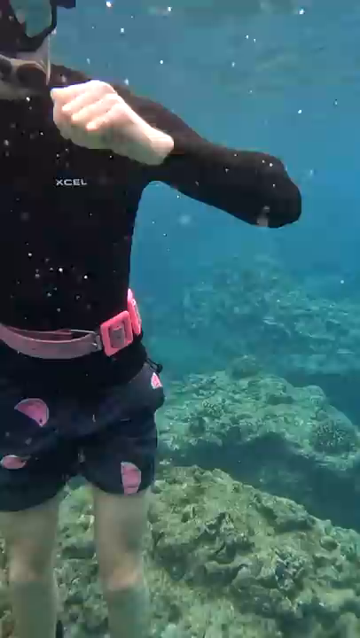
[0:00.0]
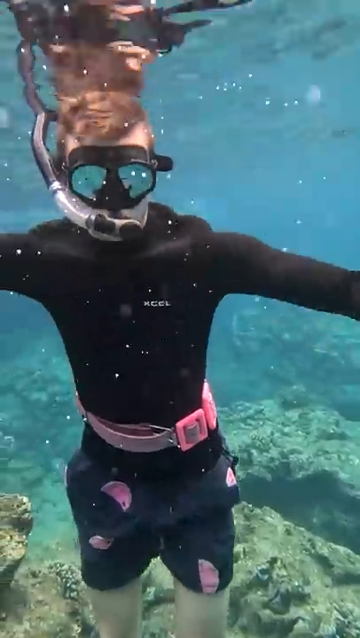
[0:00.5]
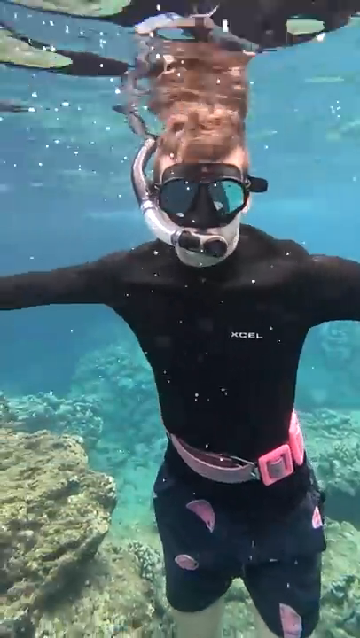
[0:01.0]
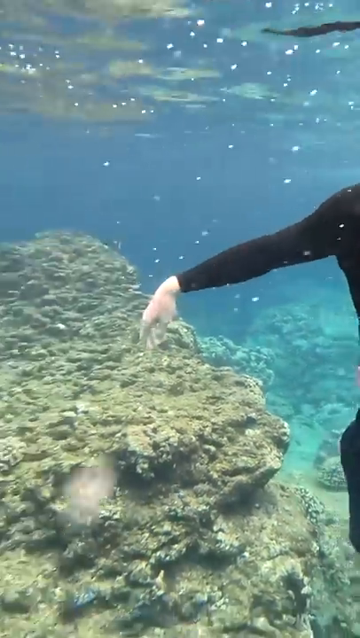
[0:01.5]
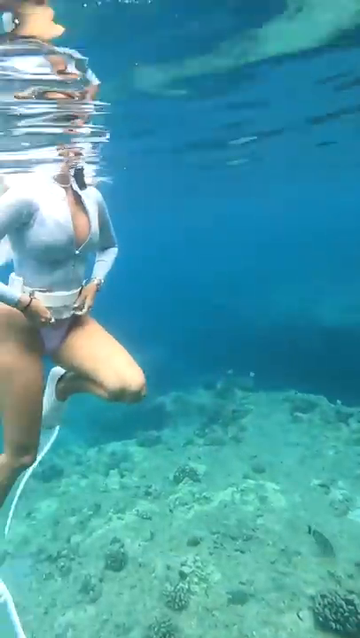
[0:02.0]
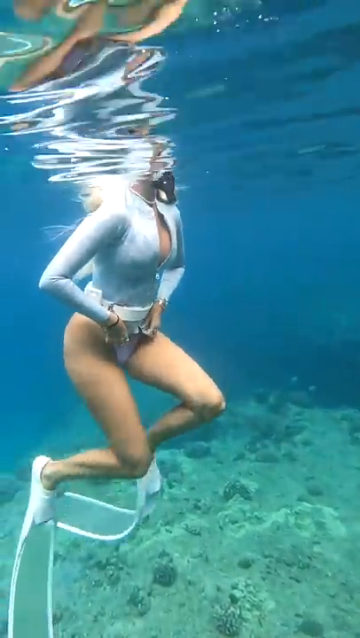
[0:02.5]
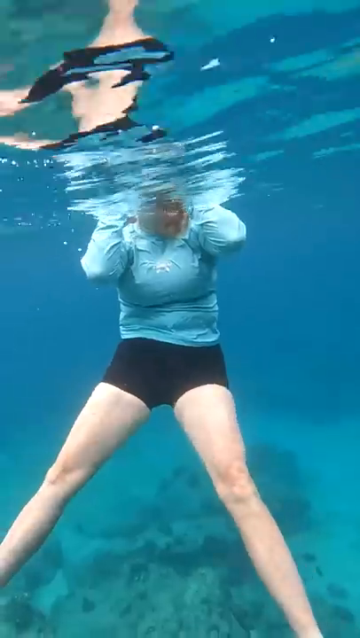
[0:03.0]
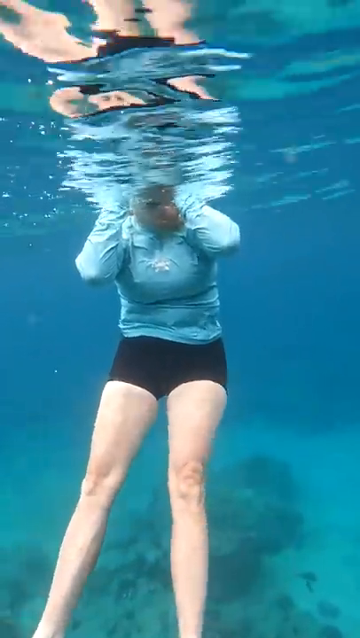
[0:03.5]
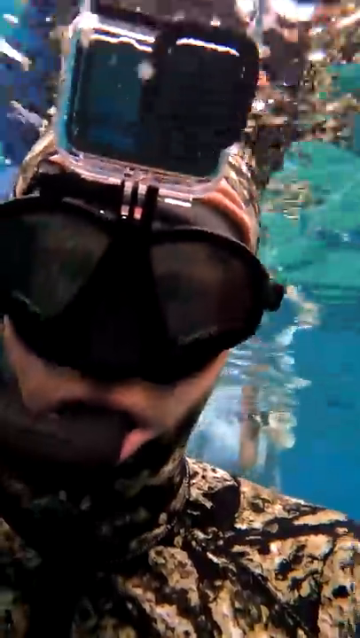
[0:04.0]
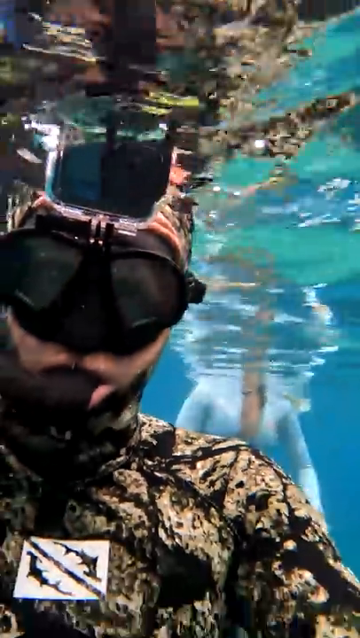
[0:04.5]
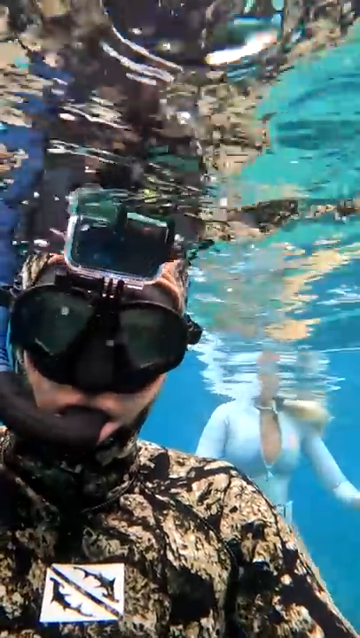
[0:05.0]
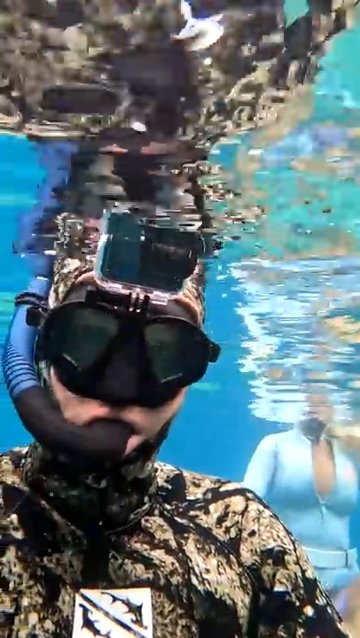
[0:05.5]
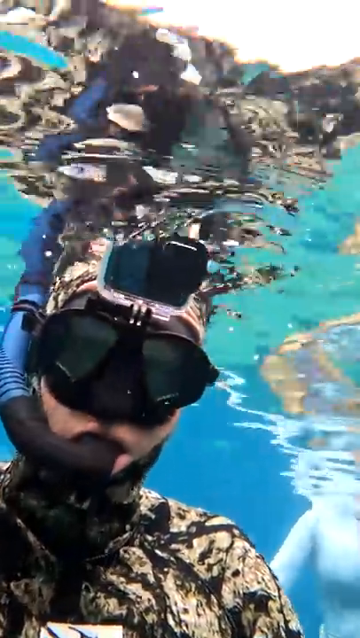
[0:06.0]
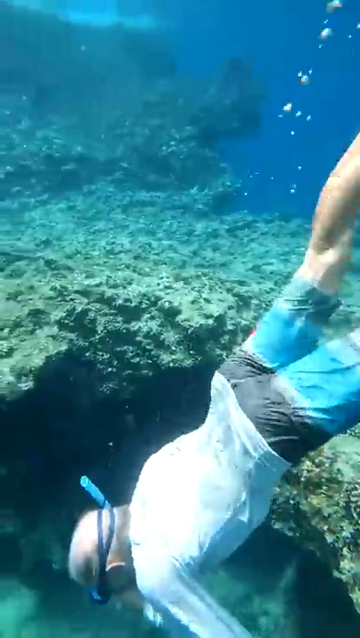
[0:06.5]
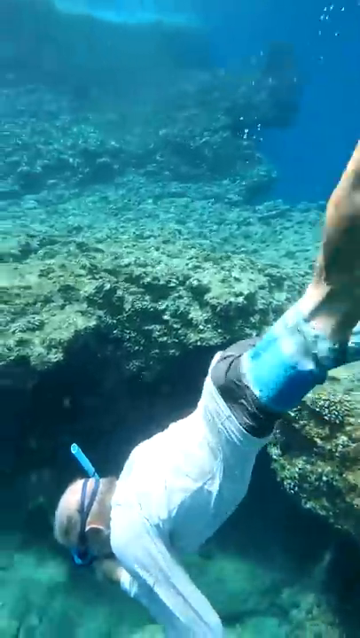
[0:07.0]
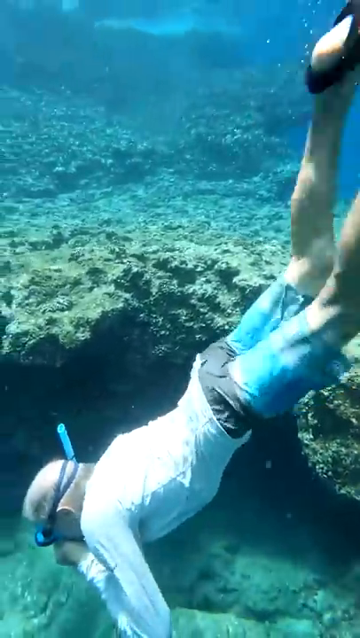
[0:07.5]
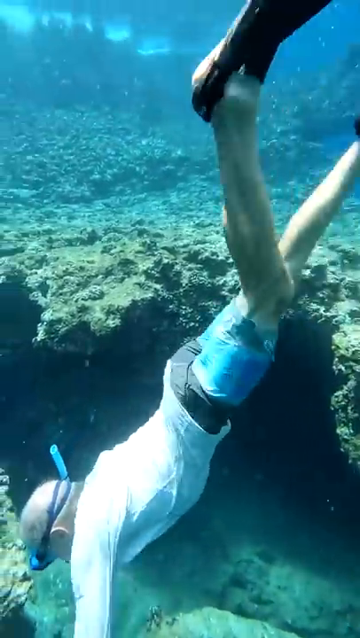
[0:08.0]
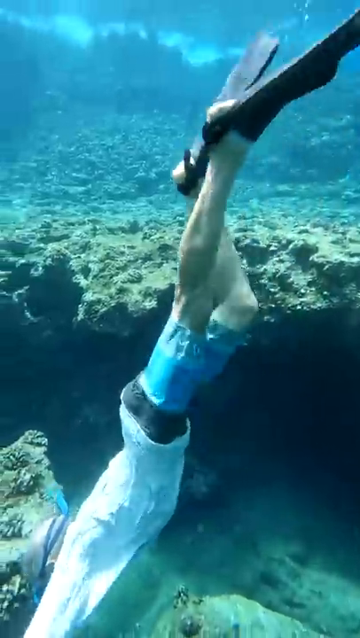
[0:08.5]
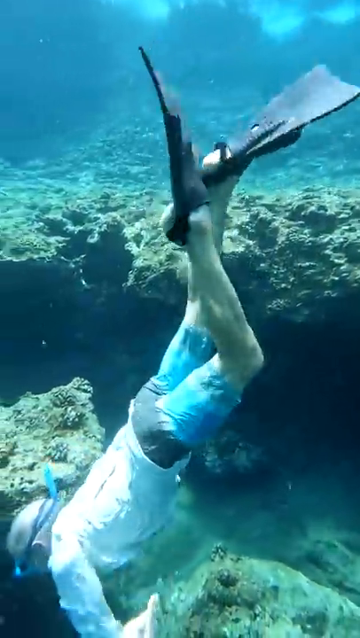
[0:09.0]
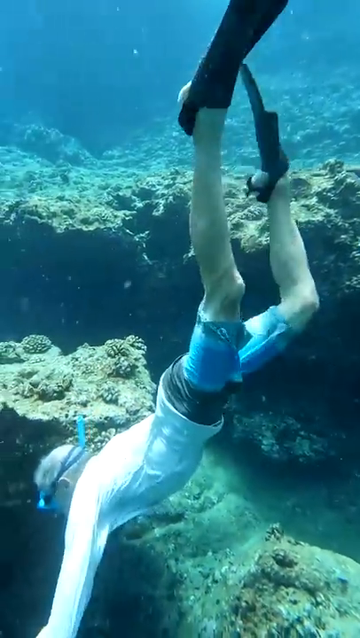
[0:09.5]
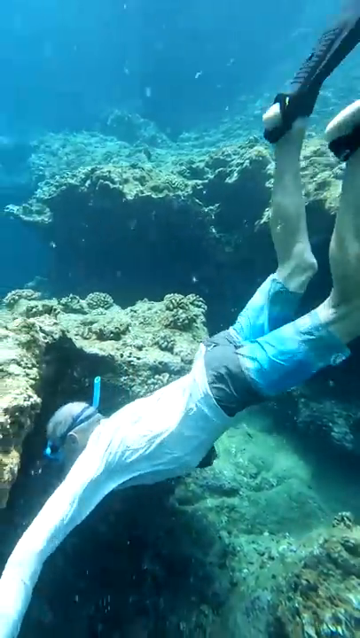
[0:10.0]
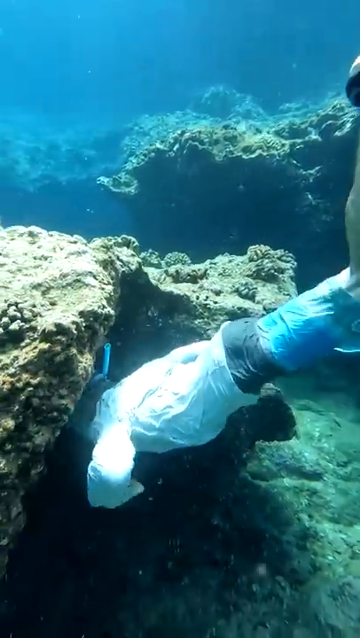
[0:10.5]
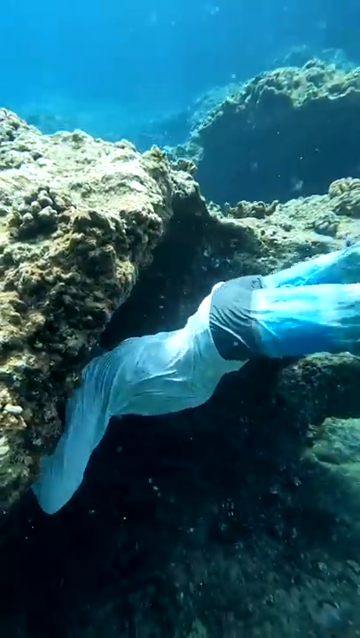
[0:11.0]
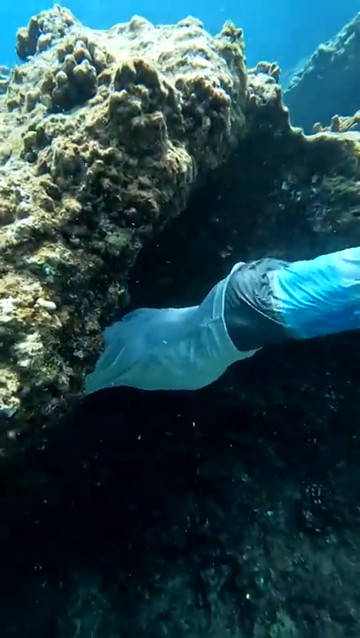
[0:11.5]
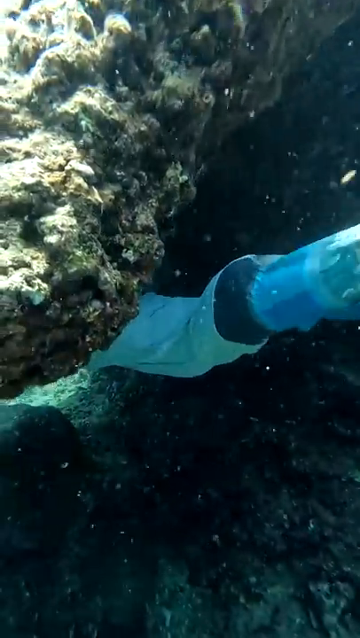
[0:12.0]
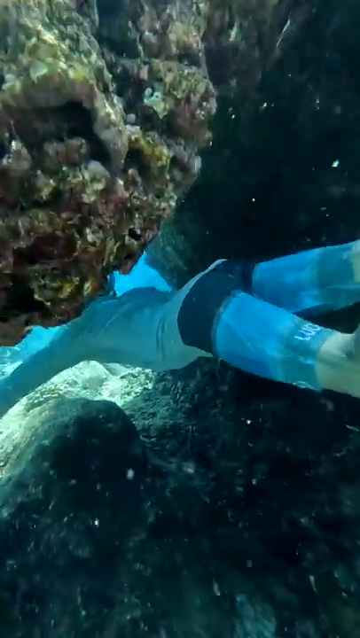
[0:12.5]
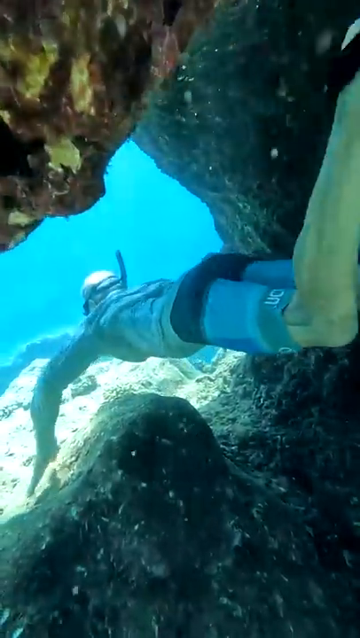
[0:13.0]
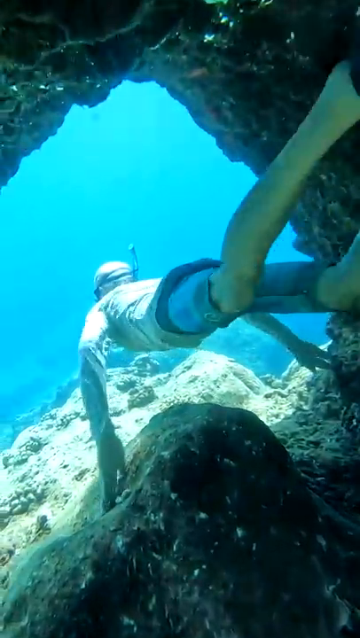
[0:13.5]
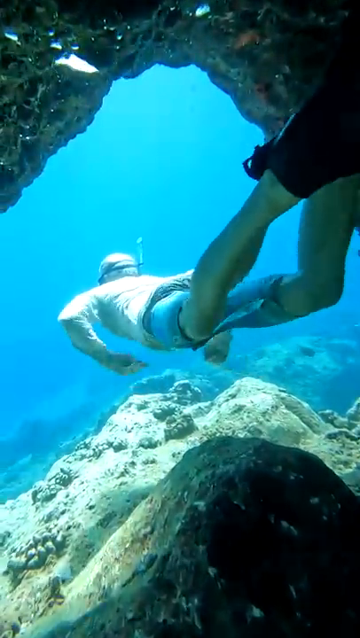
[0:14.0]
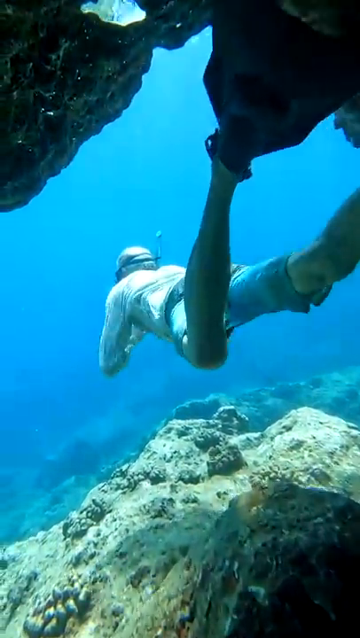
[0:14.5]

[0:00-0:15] The setting appears to be an area in a barrier, possibly near the shoreline, though the water is too deep for a person to go without scuba equipment. Three people appear, wearing partial scuba diving gear: flippers, goggles and mouthpieces. They swim around, looking at the camera. There are about three transitions between shots. One person, apparently a male, swims deeper in the water and between the caves, while the woman swims while almost staying still. They look into the camera and swim or stay put, and the surrounding environment is visible. The three wear different clothing: one man wears a swim t-shirt and trunks, the other man wears a jacket and trunks, and the woman wears a top and a bikini bottom.